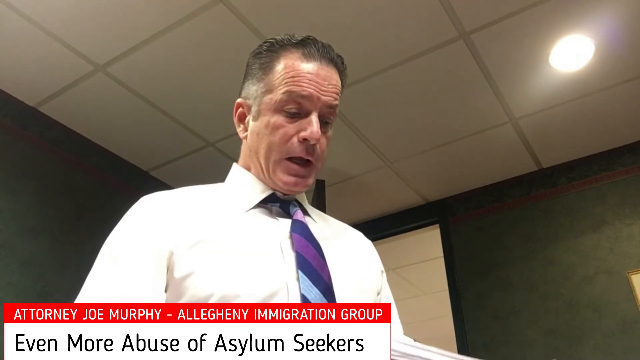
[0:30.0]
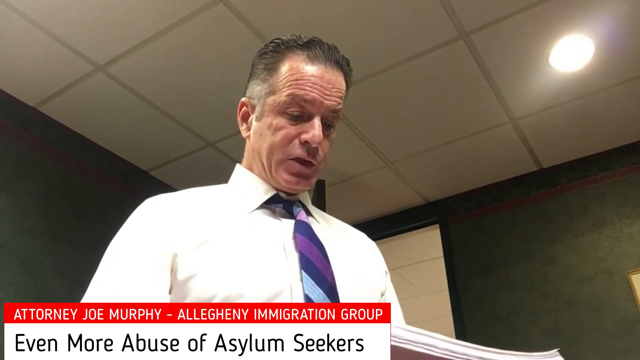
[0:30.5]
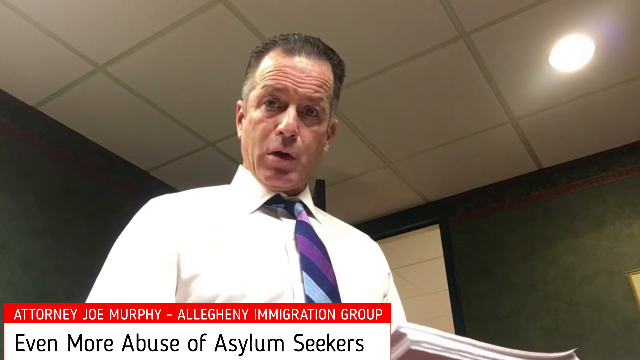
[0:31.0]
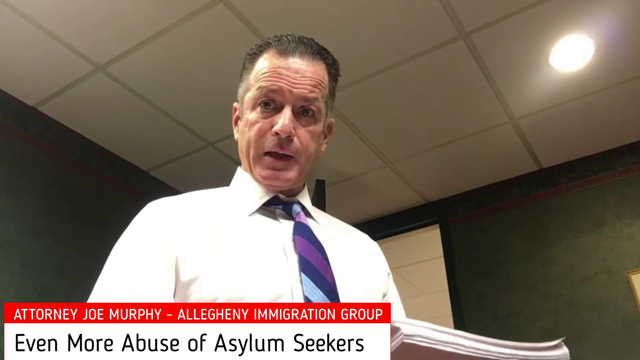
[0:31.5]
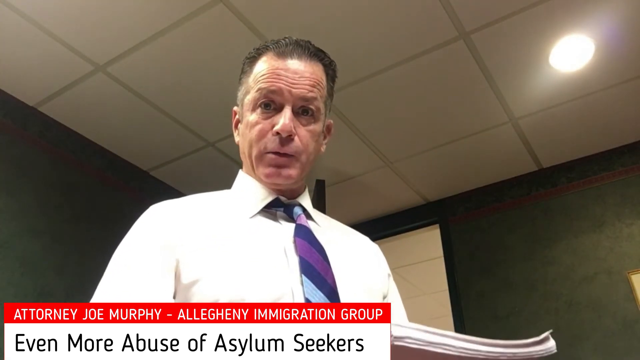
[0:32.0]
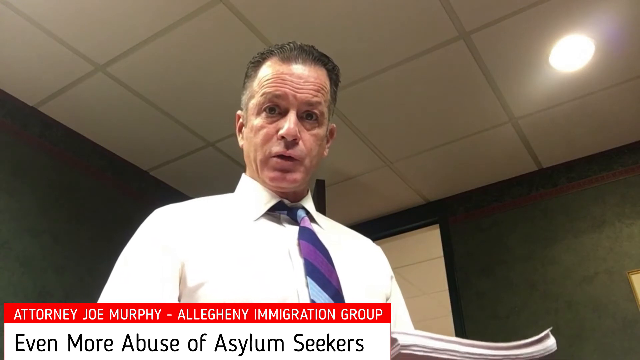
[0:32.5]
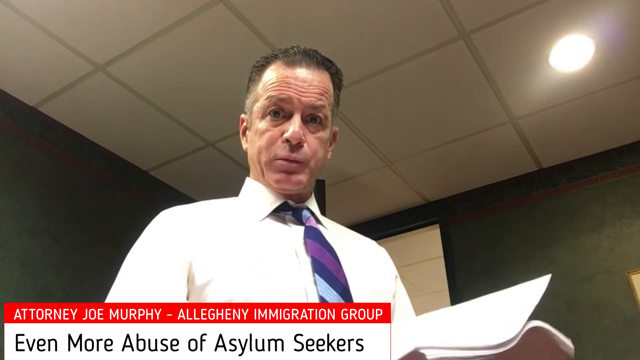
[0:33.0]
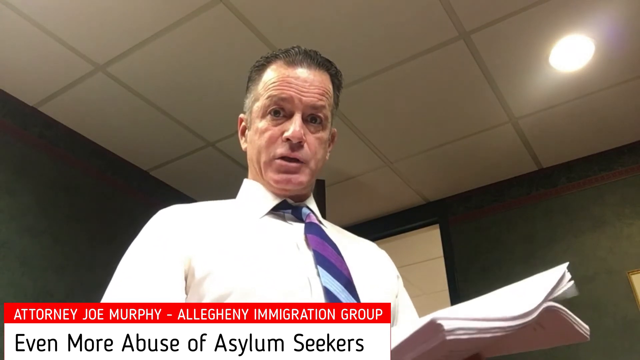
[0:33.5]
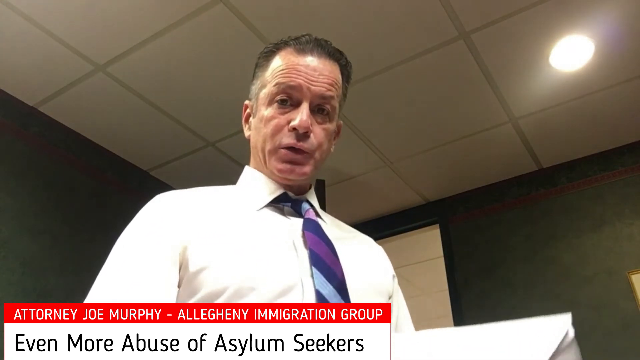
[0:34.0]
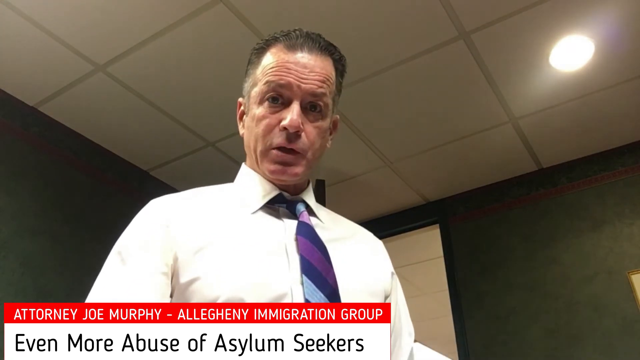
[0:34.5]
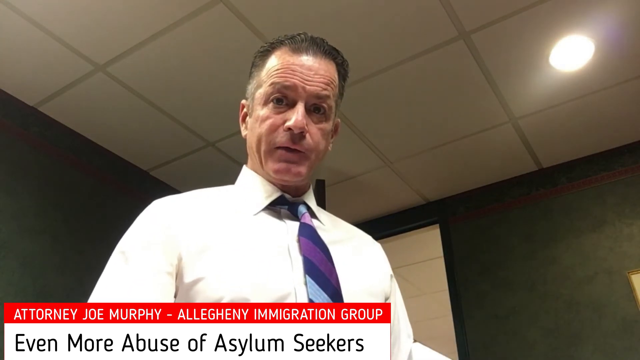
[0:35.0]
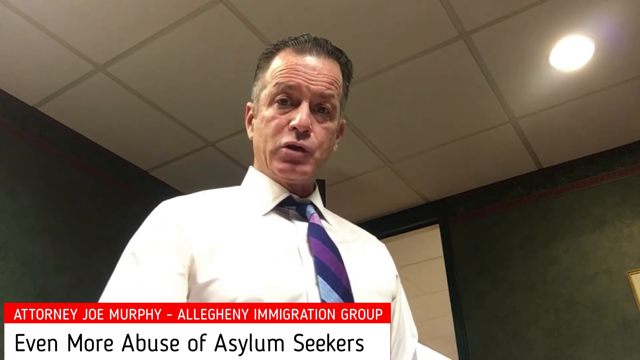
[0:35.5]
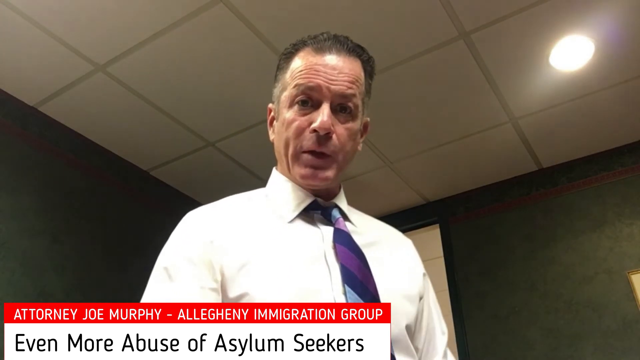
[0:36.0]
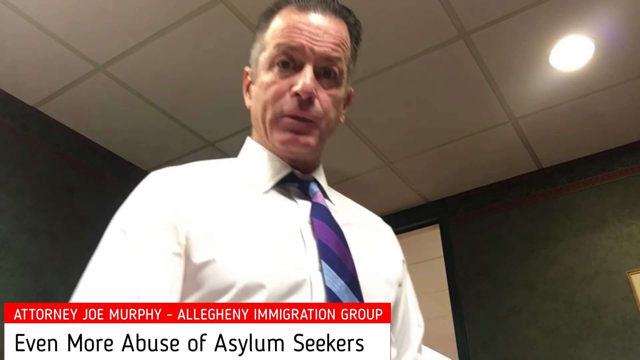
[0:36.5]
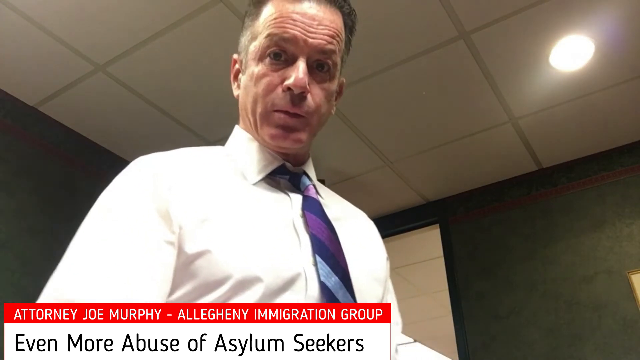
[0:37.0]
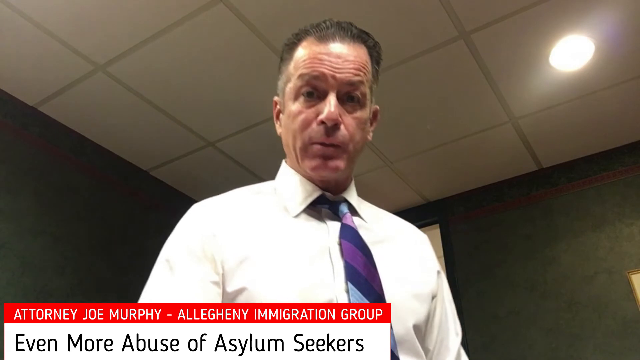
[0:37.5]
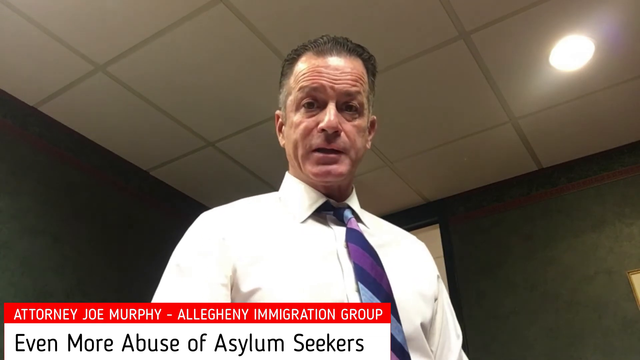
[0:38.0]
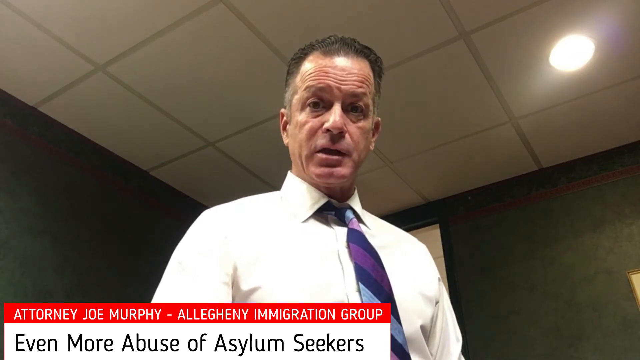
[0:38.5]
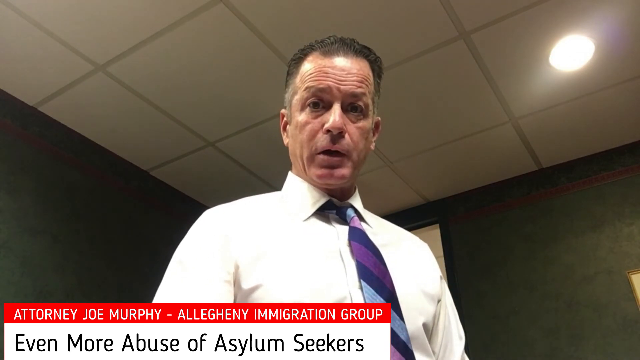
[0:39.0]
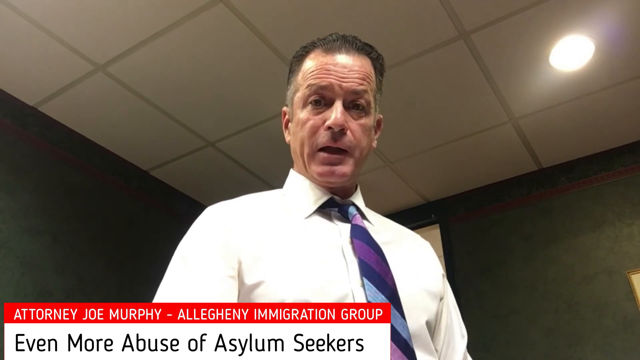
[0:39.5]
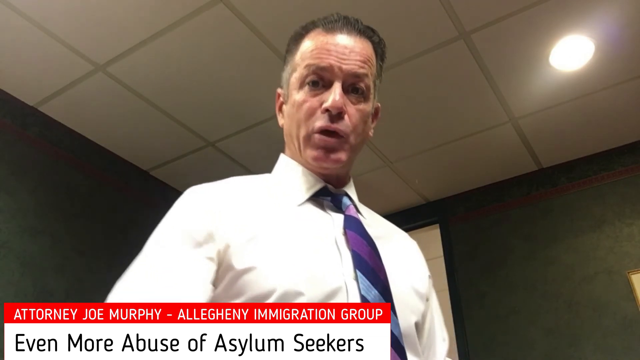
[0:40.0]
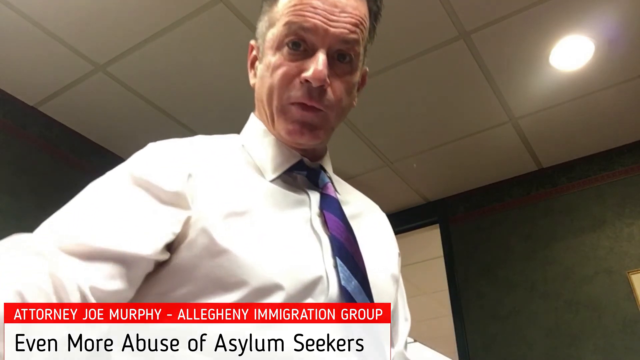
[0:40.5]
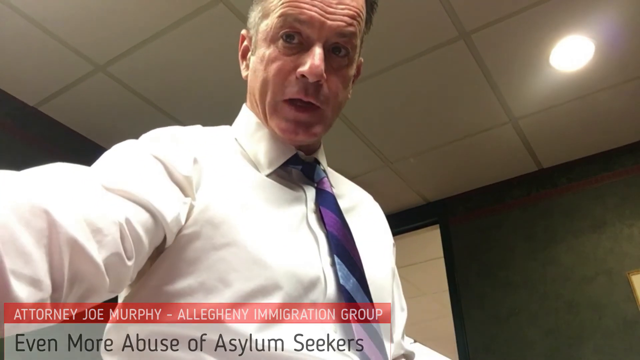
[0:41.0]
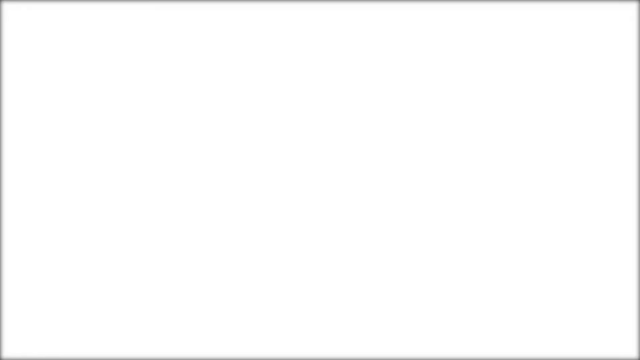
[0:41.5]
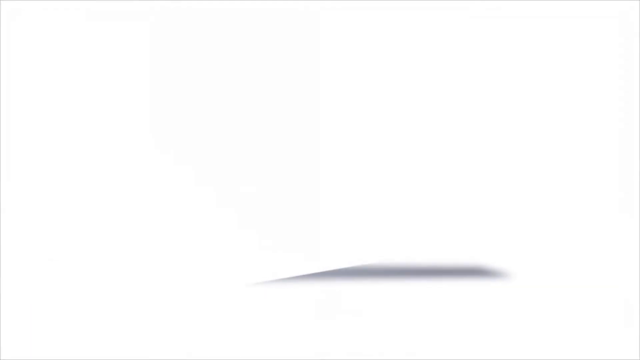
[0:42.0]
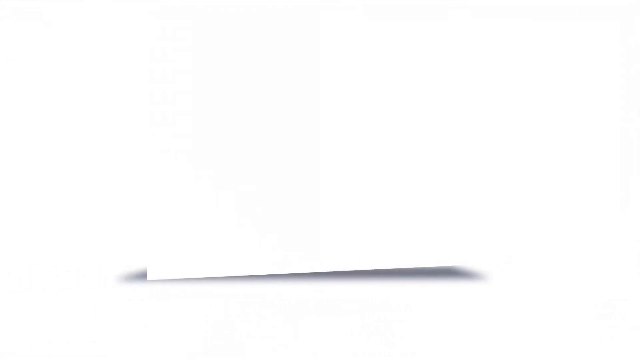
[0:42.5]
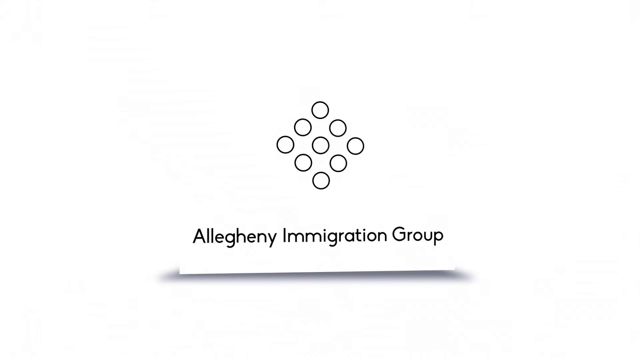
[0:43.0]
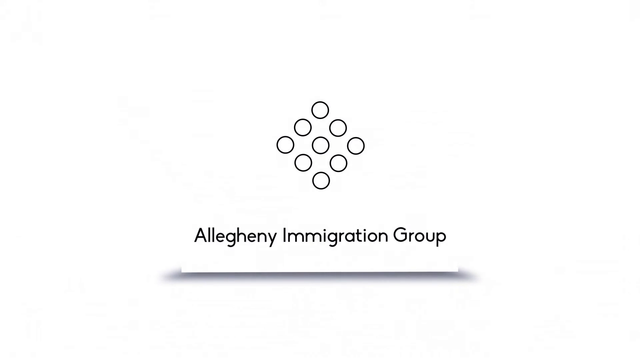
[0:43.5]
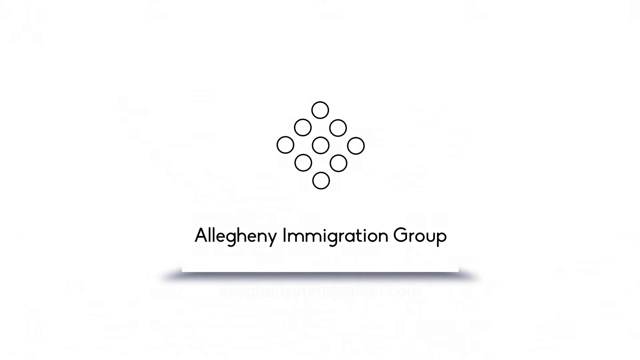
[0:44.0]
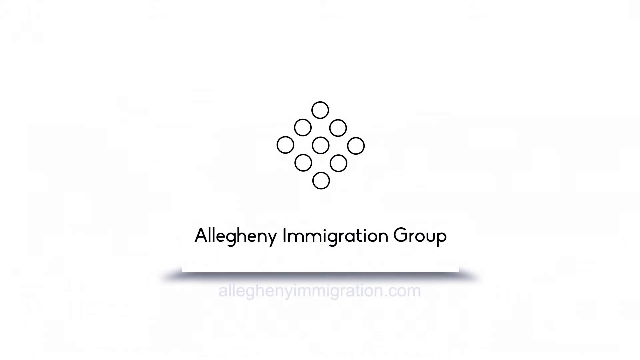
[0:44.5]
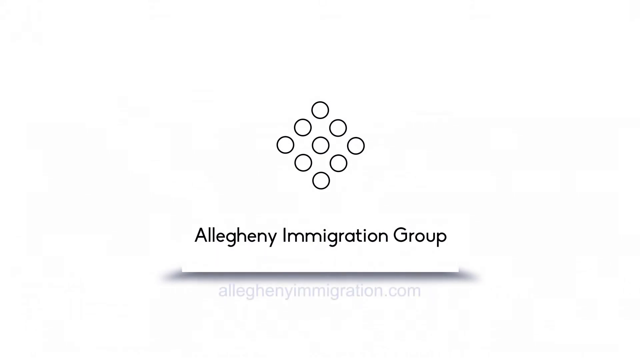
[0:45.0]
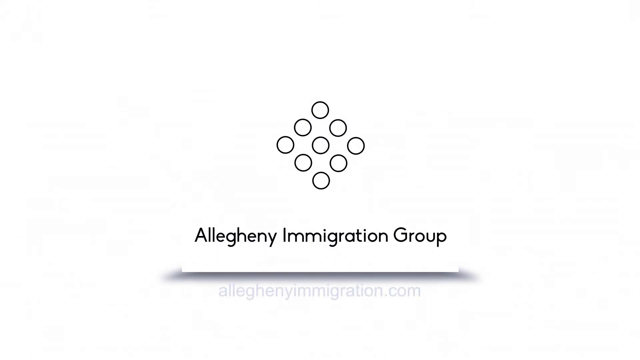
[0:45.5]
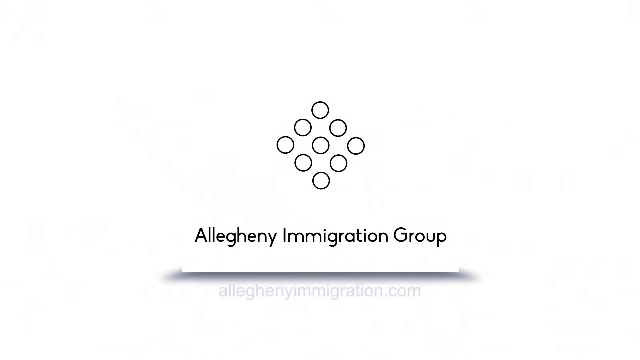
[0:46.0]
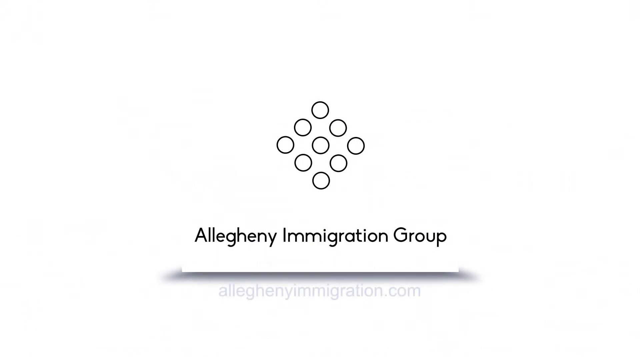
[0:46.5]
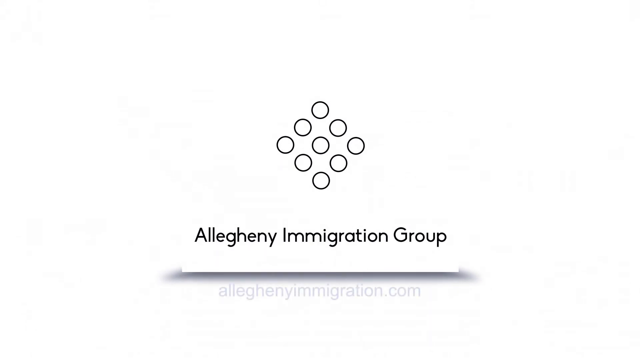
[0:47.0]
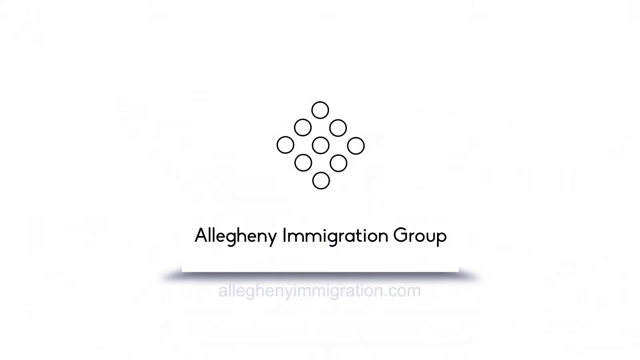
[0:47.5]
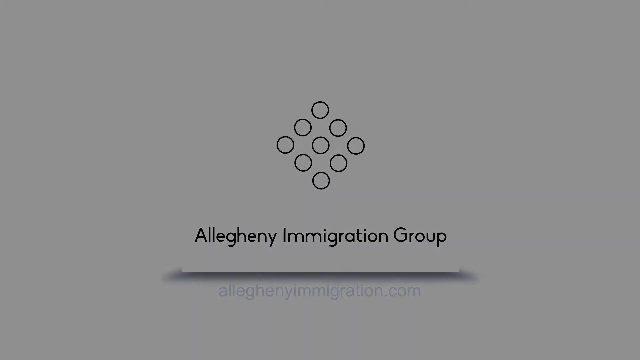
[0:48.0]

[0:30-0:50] The man is now standing up and talking, wearing a white shirt with a tie in dark blue, light blue and purple. He holds a paper or document, looks at it, and looks at the camera to talk. He does not stay in the same position but moves a little. At the end he holds the camera or turns it off. Text written on a white background then appears, including the words "immigration group," followed by a blank page. The room is an office or his house; the ceiling has a neat design with triangles and squares, the wall is dark green, and there is a door behind him.